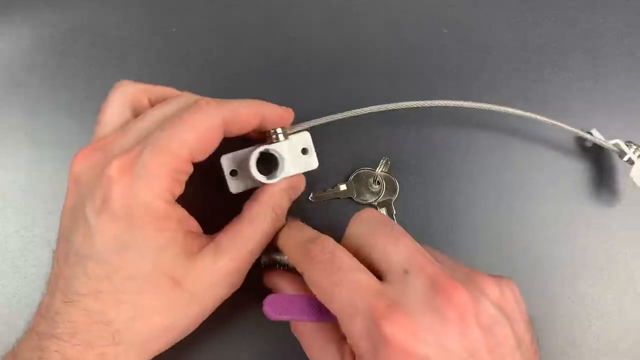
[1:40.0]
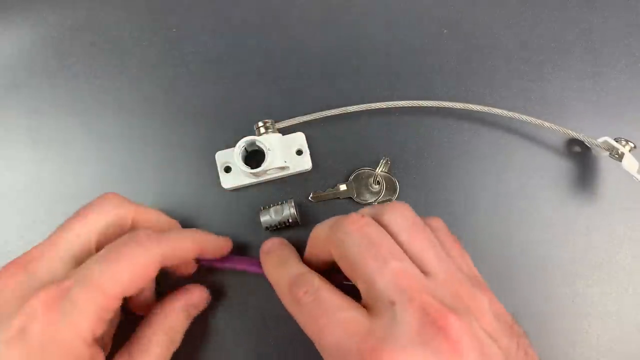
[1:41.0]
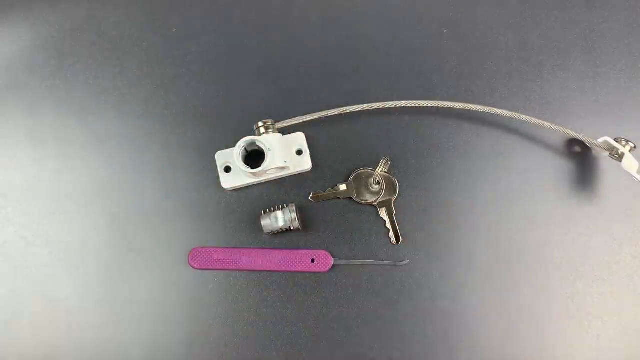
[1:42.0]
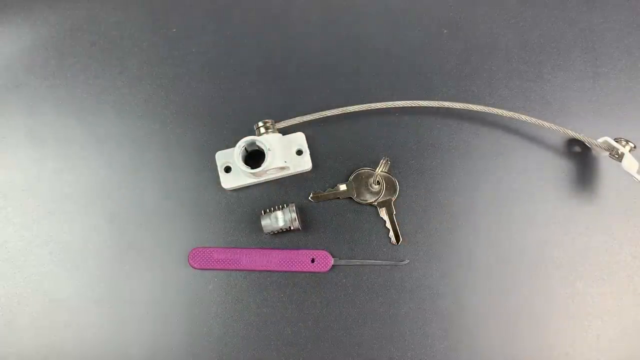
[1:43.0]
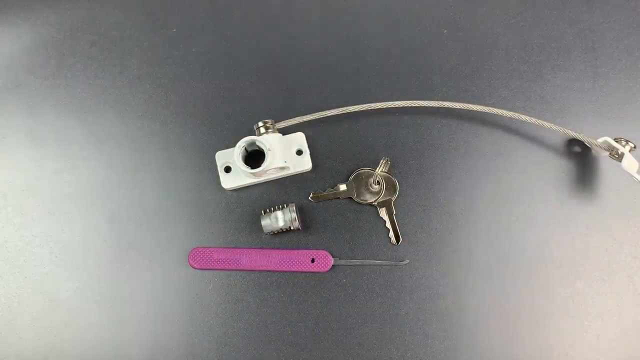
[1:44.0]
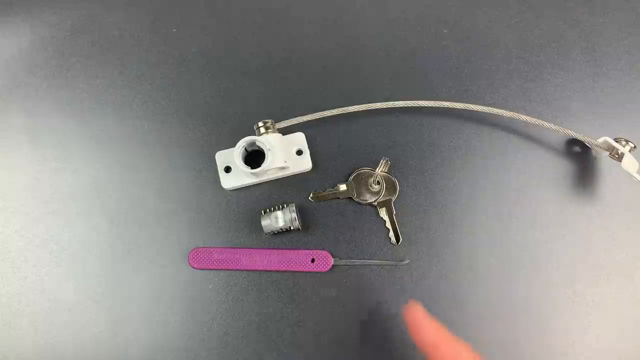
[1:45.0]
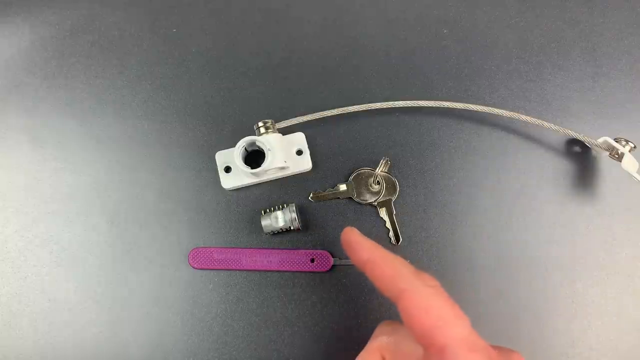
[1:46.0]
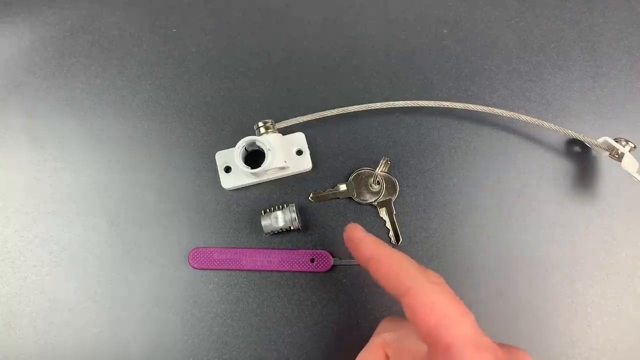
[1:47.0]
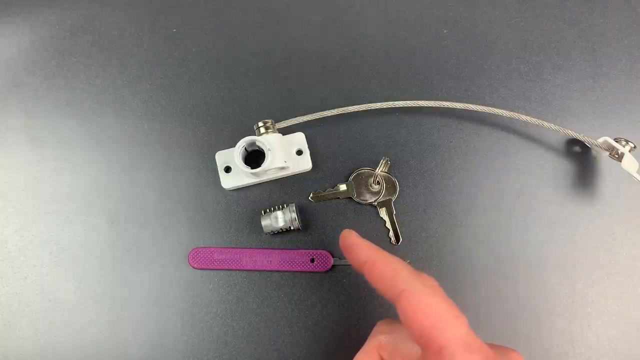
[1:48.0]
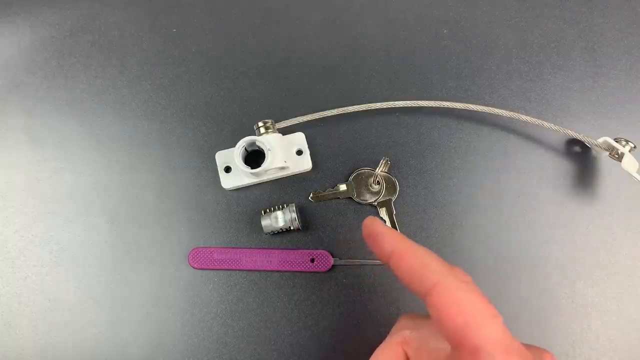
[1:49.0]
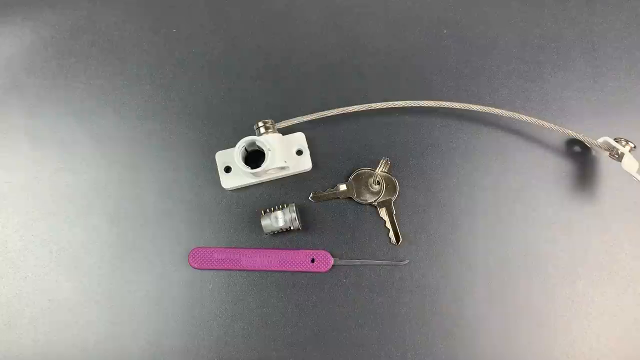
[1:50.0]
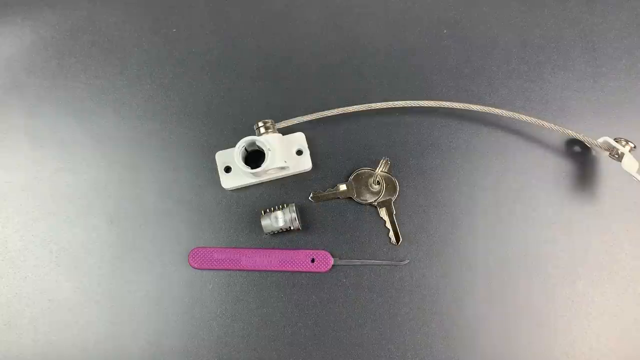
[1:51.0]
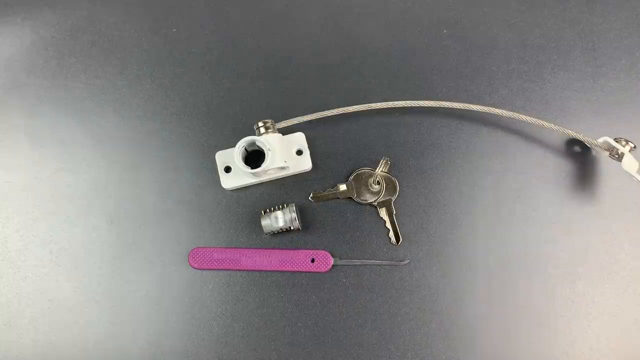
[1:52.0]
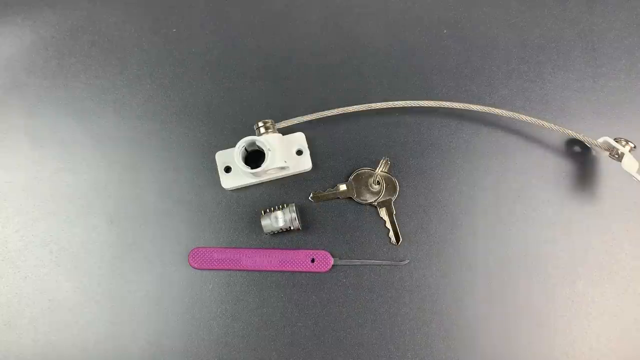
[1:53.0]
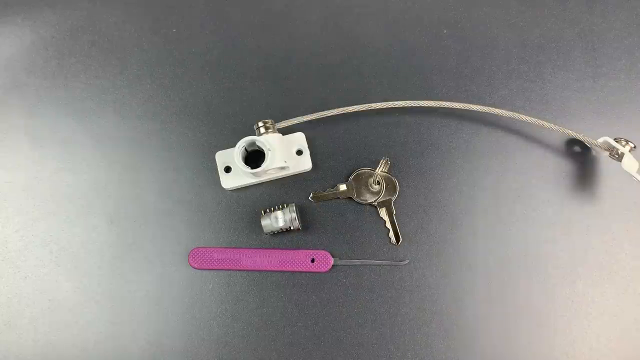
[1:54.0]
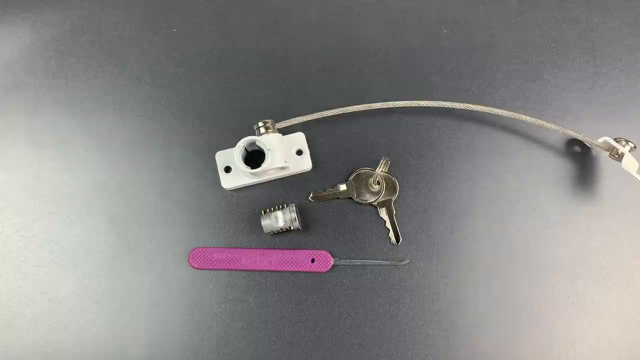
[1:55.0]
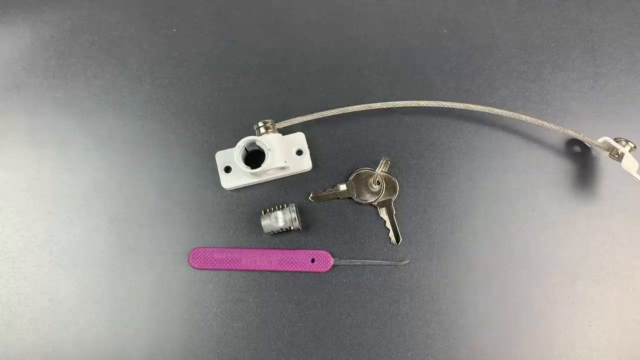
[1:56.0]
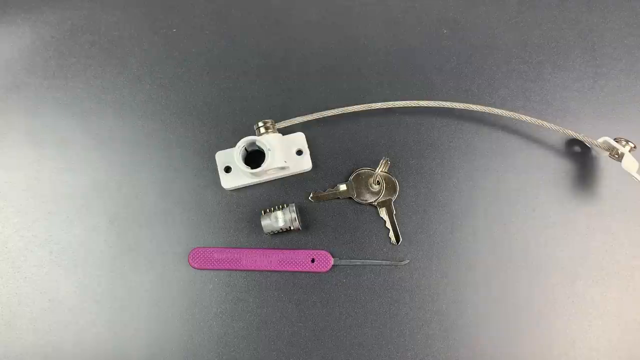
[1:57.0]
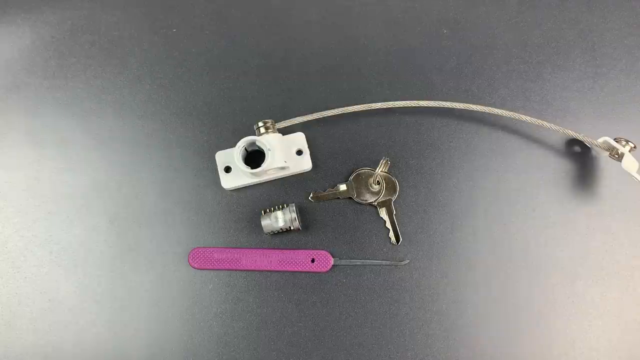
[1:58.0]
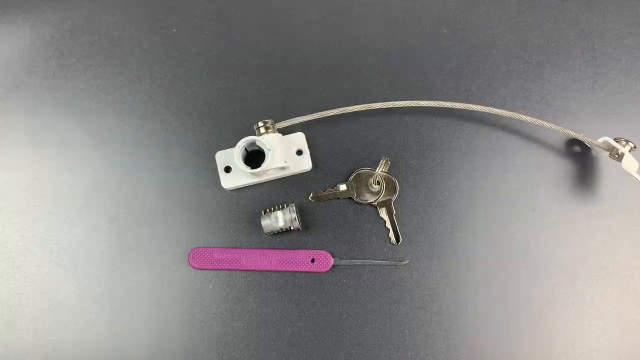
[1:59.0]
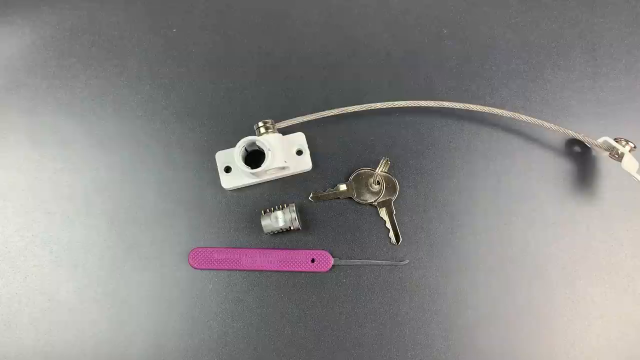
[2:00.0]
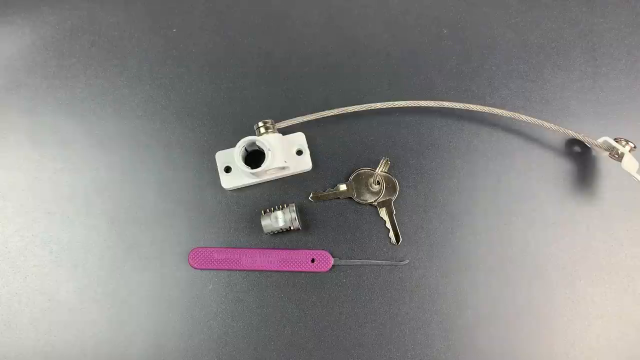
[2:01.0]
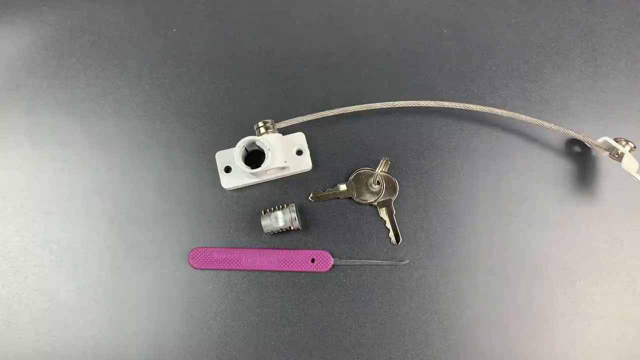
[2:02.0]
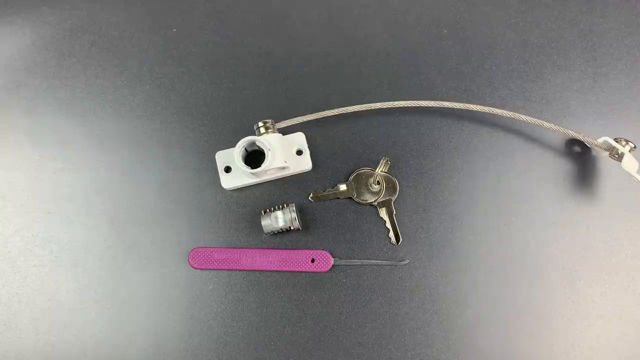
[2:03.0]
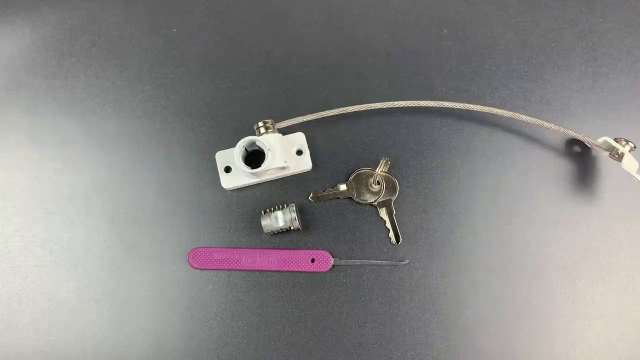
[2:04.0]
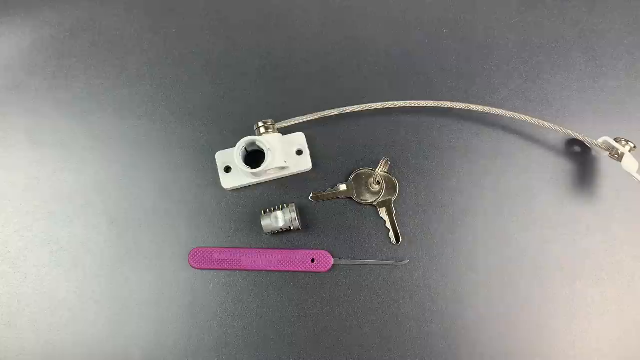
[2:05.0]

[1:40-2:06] A man's two hands point out four items: a metal pick, a set of two keys, a metal door lock, and a door lock receptacle that holds the lock. He points to the pick he used to take the metal piece out of the receptacle. The metal door lock has a metal bar on it that possibly provides some sort of stabilization. Then the video stops, the man's hands go away, and the four objects are left sitting in view.